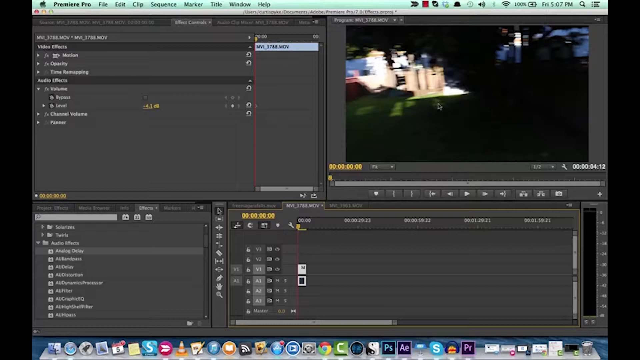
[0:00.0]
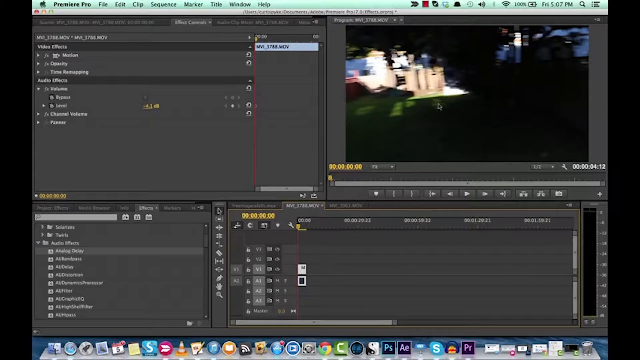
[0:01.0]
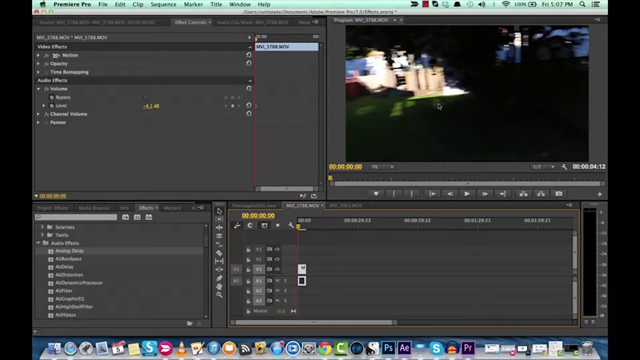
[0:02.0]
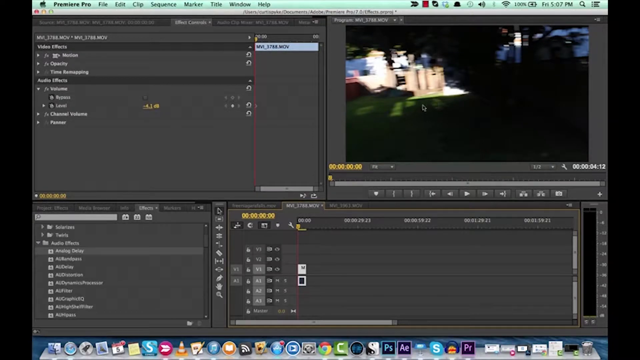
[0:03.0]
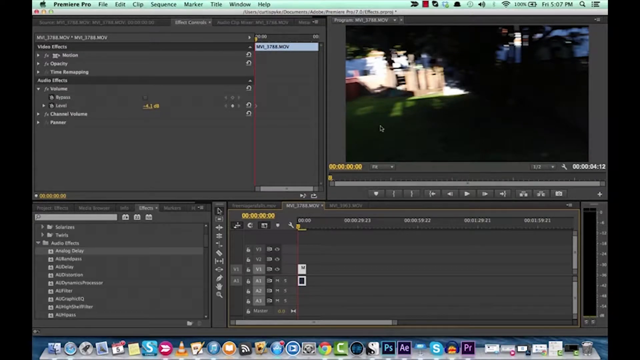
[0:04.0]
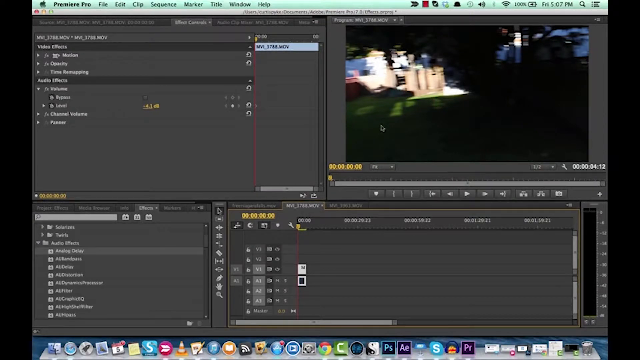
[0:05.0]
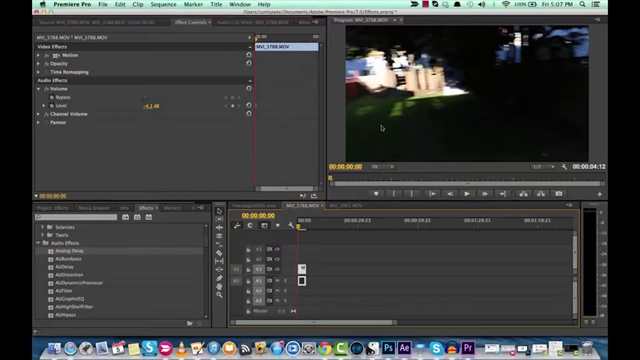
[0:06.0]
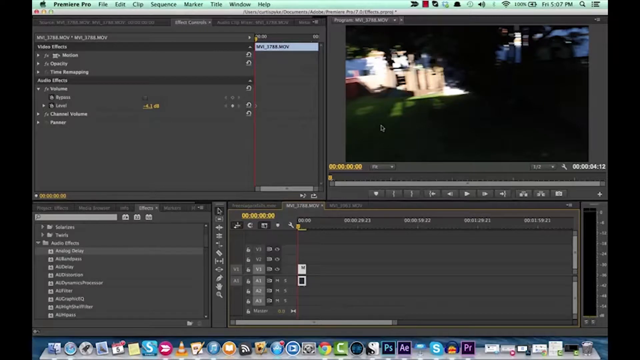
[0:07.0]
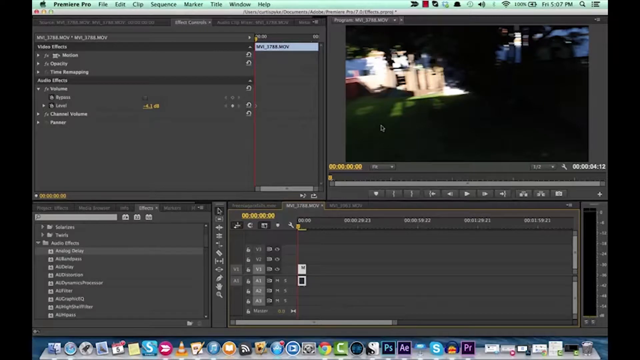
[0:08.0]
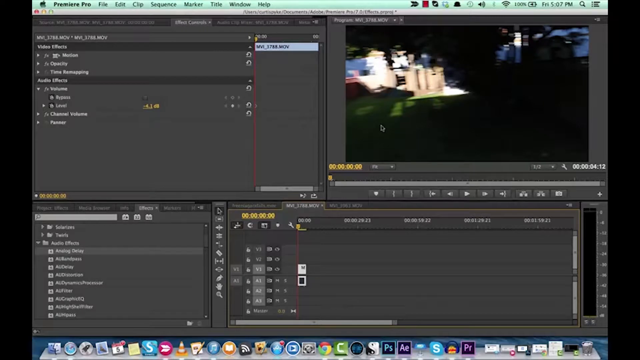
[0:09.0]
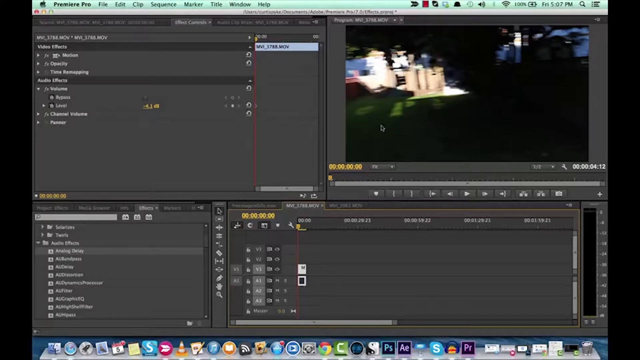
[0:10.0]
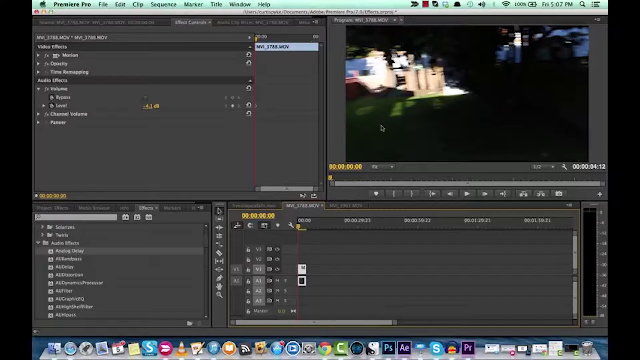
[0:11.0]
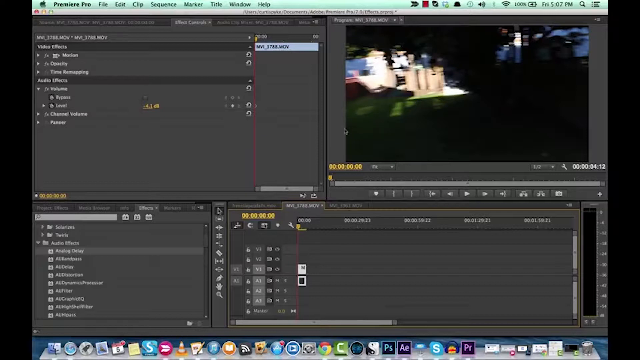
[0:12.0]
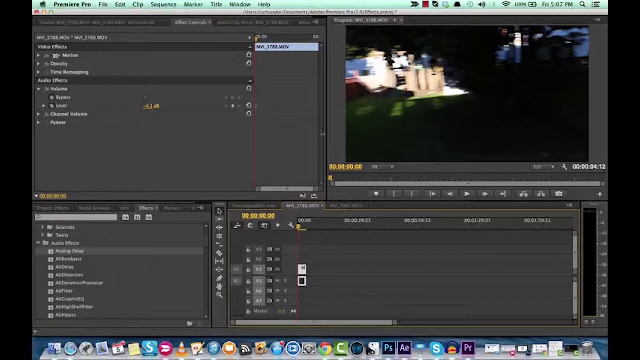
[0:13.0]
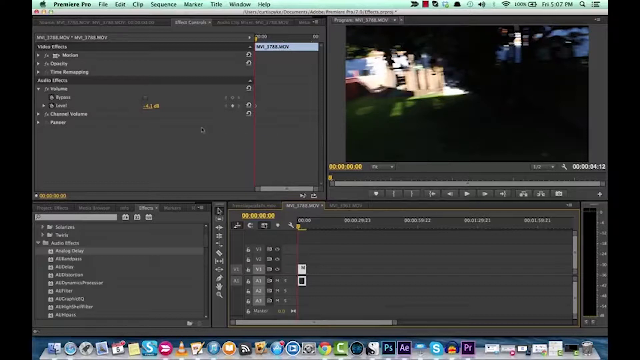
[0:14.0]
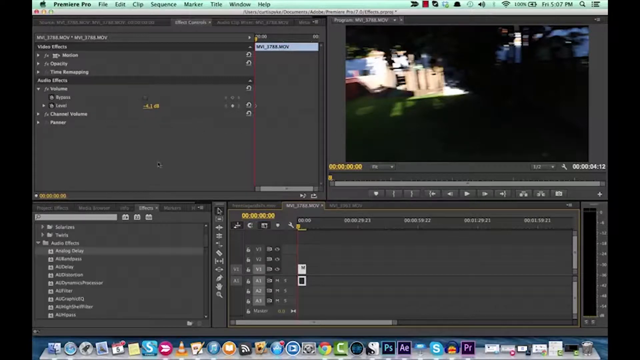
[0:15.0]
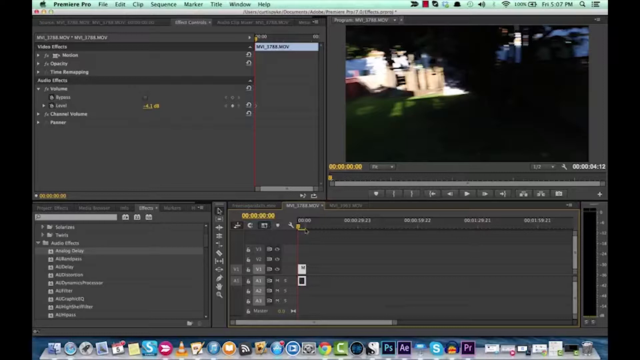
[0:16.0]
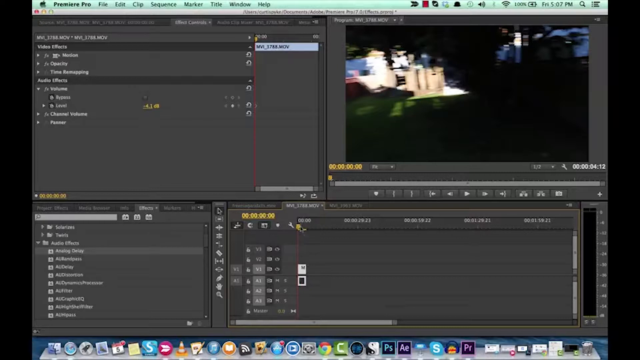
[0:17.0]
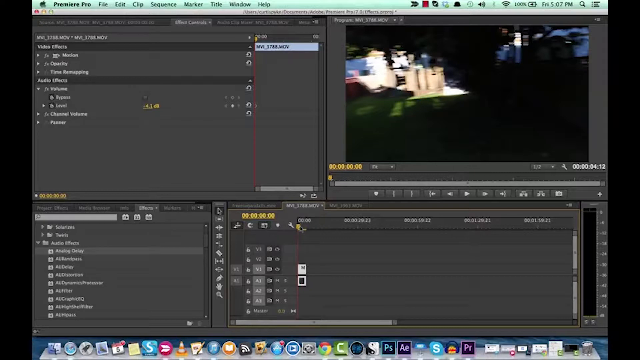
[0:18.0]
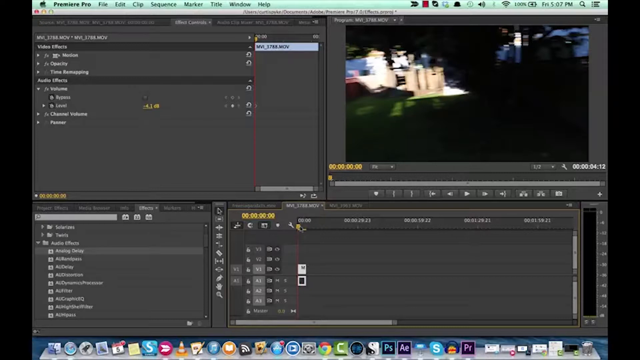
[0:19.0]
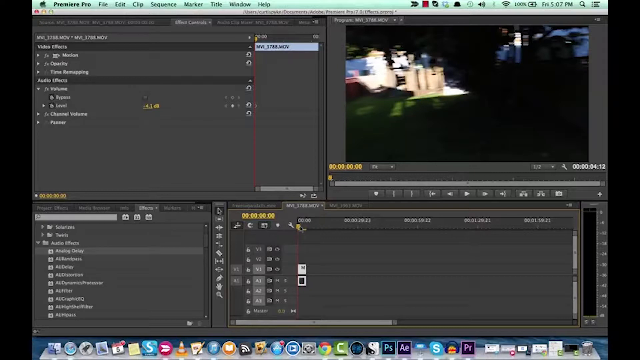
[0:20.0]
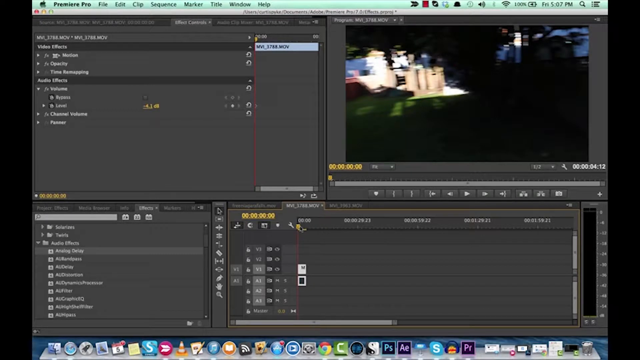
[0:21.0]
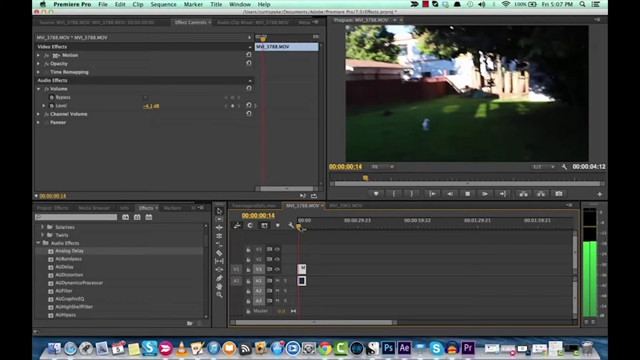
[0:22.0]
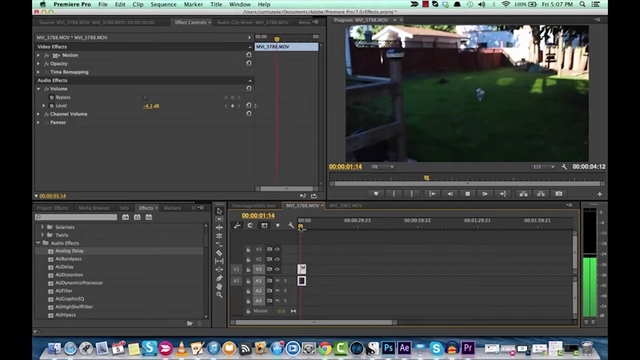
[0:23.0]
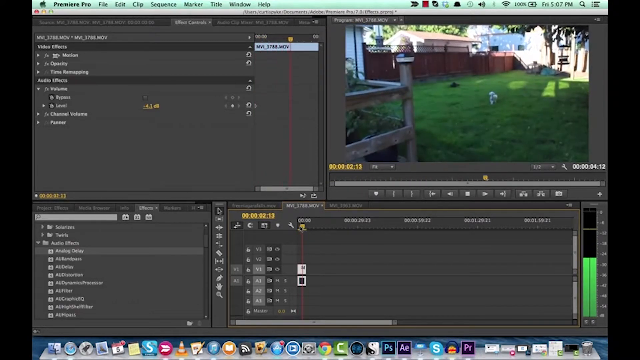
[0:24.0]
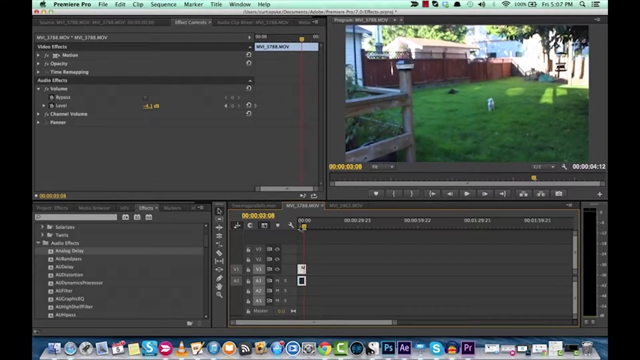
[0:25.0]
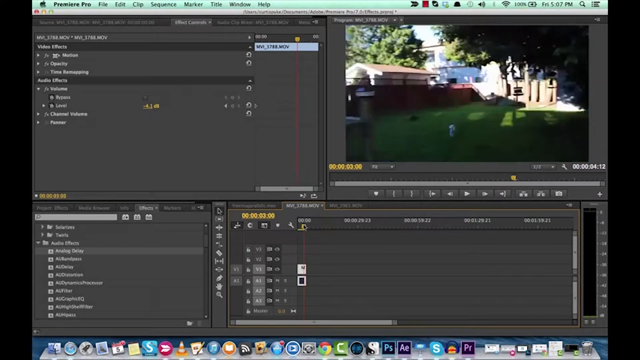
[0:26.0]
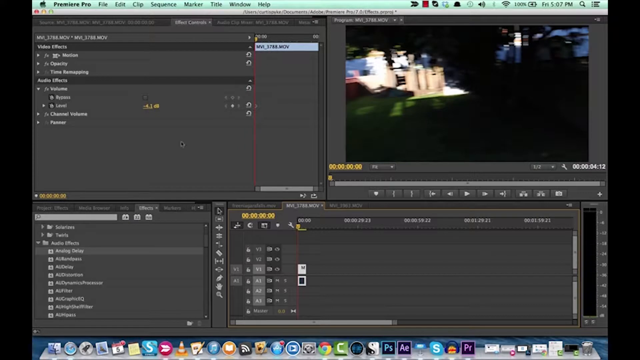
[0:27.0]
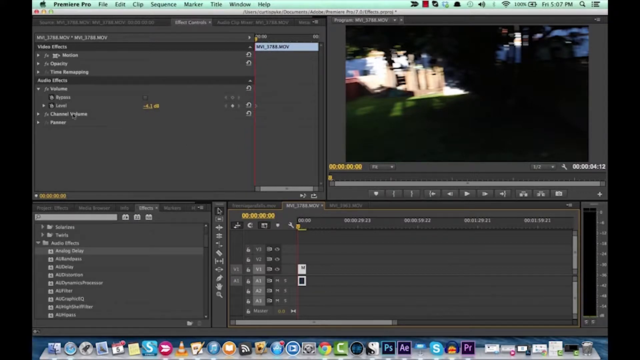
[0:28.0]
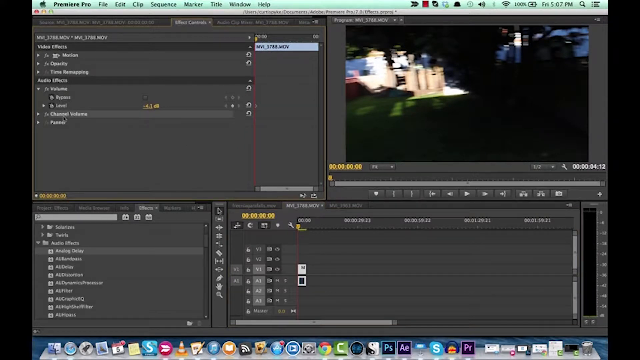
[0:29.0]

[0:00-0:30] Premiere Pro is open with a timeline, and the mouse hovers over what appears to be a setting for an effect; the text "video effects" is visible. The left-hand side of the screen is gray, in a design-editing-style program. The user adjusts some settings and then plays a video as a preview in the video preview box on the right side of the screen. Effects are being added to the edit; for example, Analog Delay is selected on the left-hand side. At the top left of the screen is the file name of the video being edited with the effects applied. The user plays the footage and, while it plays, hovers across it, apparently showing that the preview has reached its end, and then hits play.